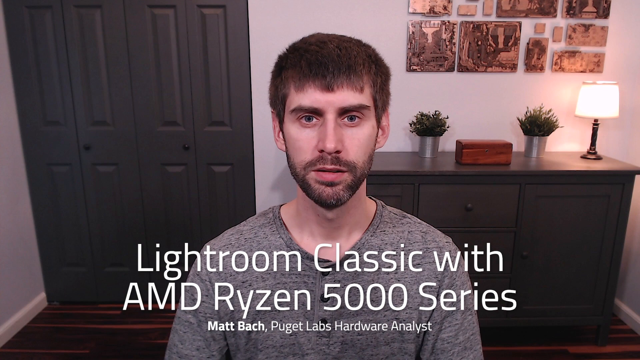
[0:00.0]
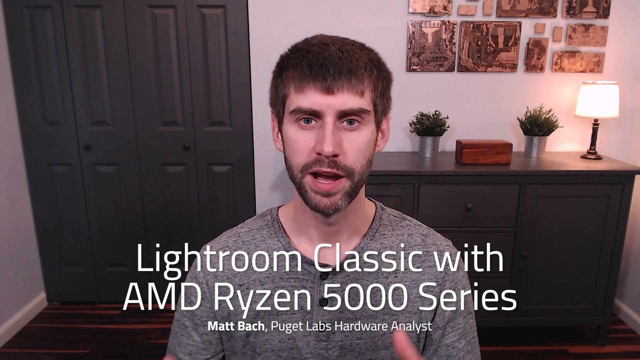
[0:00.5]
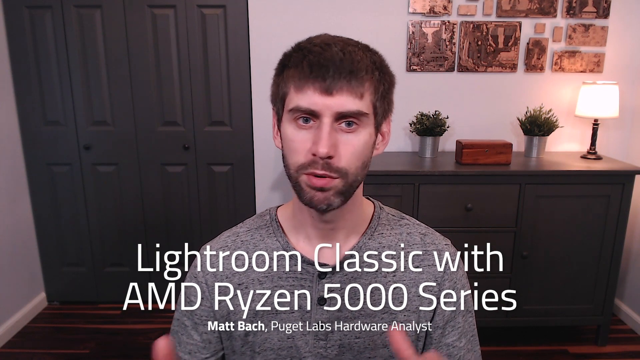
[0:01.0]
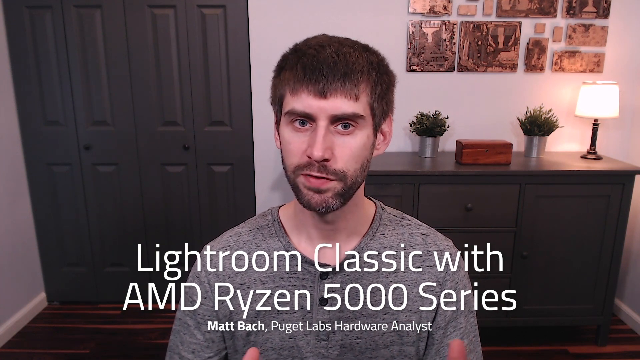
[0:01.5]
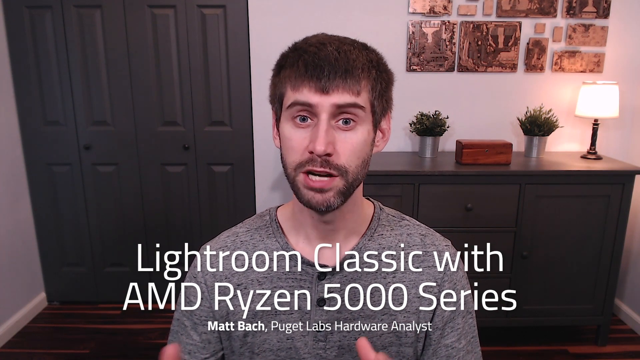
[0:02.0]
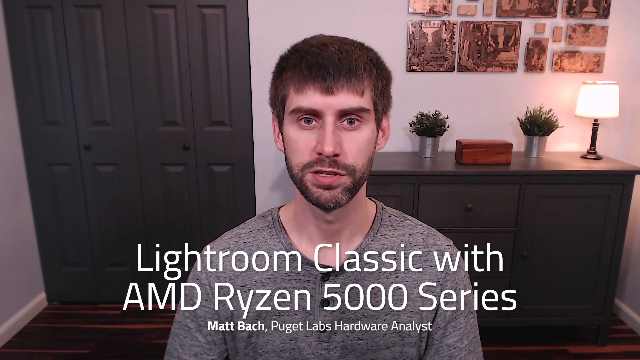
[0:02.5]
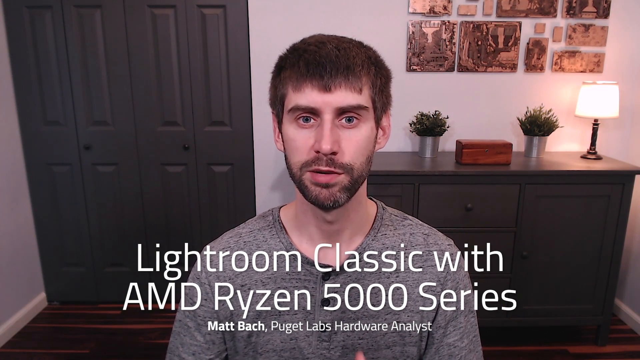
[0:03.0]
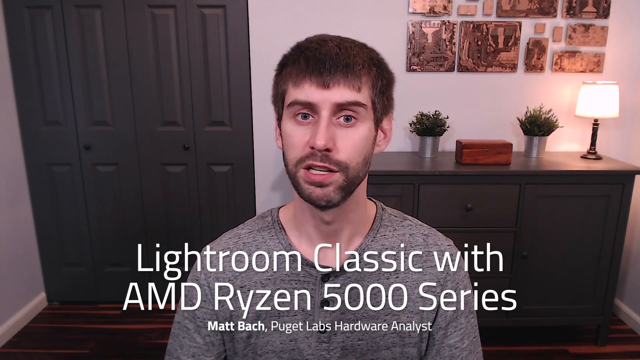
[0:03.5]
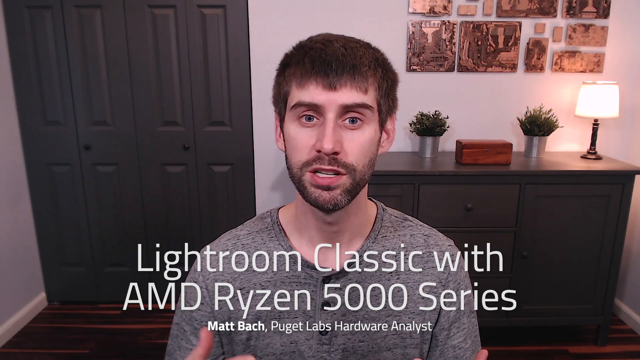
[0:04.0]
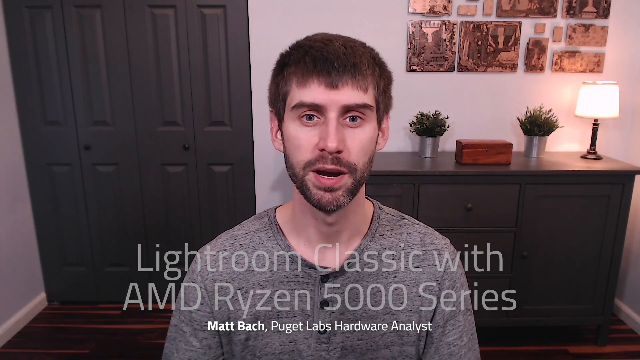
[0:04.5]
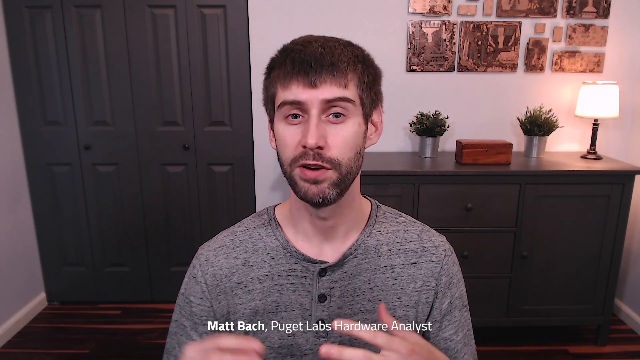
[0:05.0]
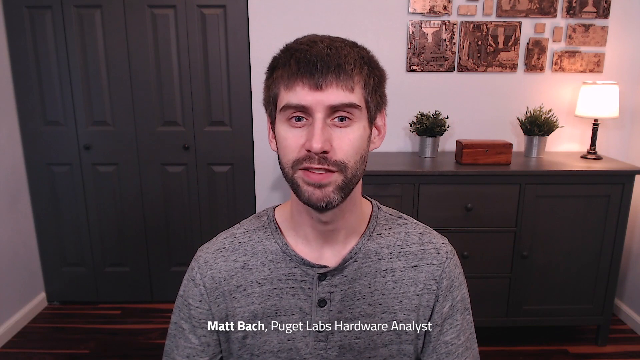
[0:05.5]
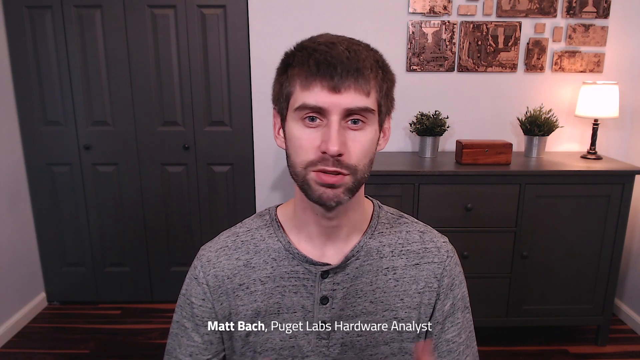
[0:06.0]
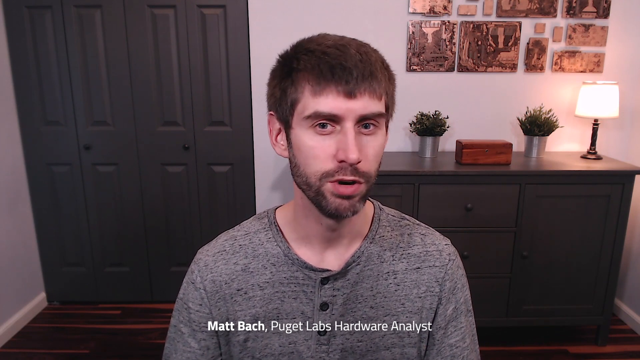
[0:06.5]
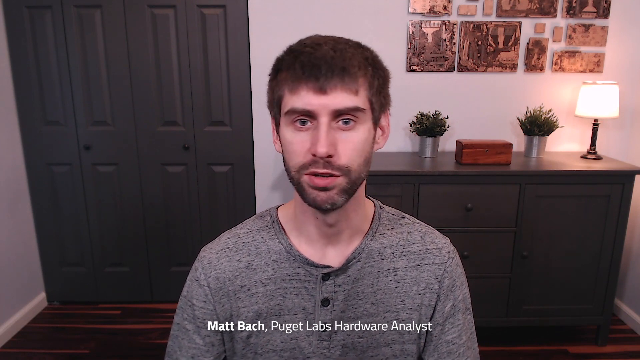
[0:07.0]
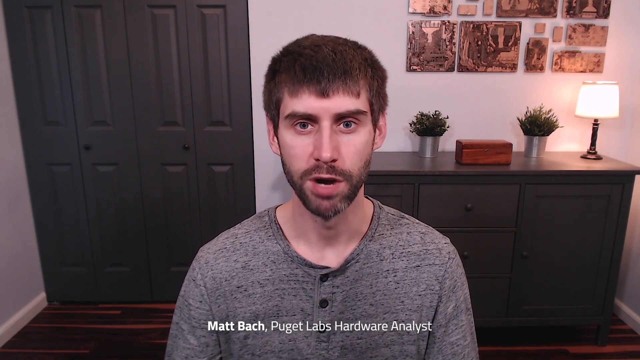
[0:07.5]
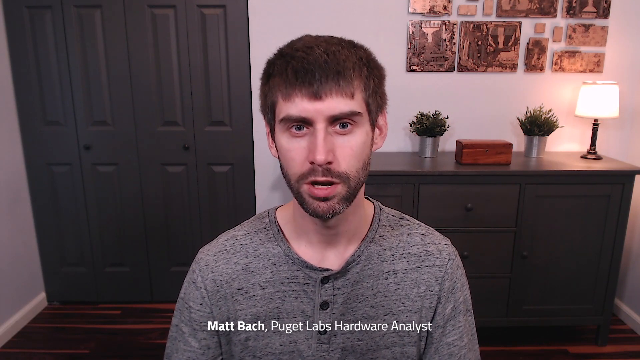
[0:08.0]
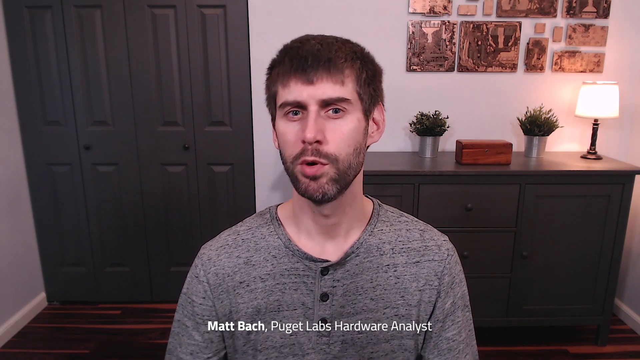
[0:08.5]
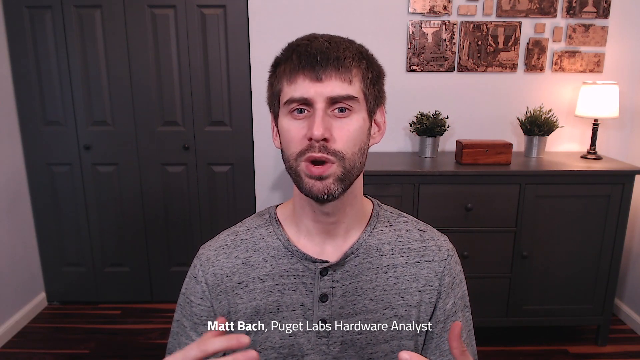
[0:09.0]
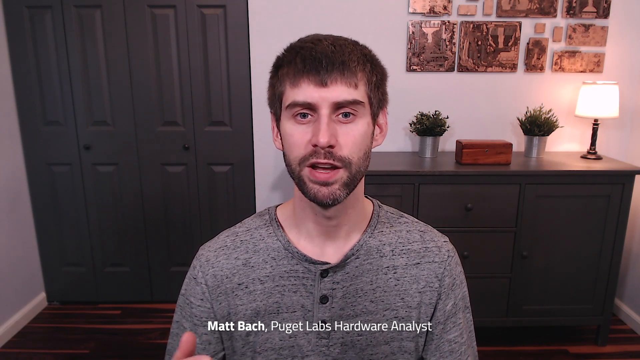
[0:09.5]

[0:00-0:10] Matt Bach, a hardware analyst at Puget Labs, is the only person in the video. He looks like he is in his early thirties, is slender, and has dark brown hair. He appears to be giving a briefing, explaining something he has been working on. The camera does not move. The setting looks like a study room at home, with a shelf and some paintings on the wall.